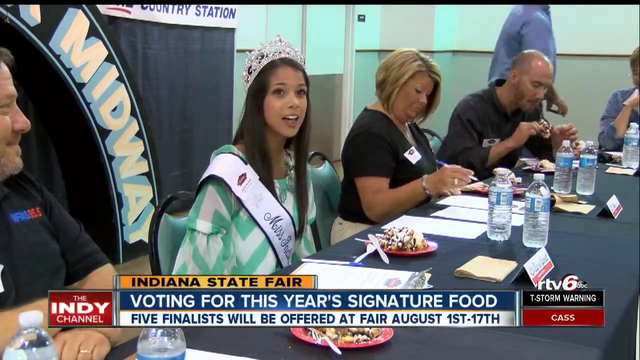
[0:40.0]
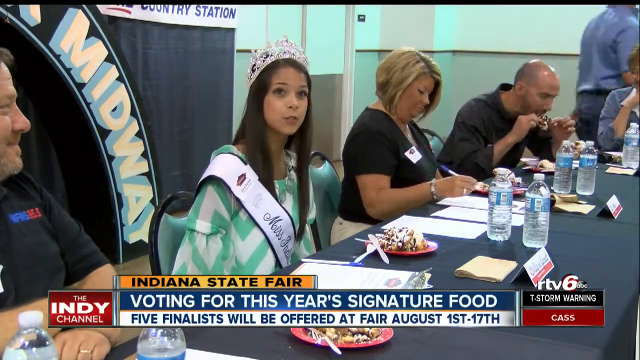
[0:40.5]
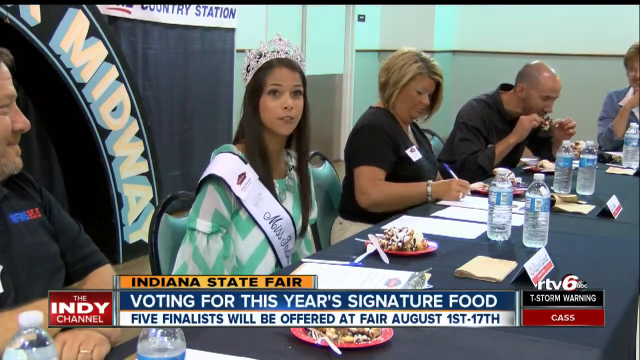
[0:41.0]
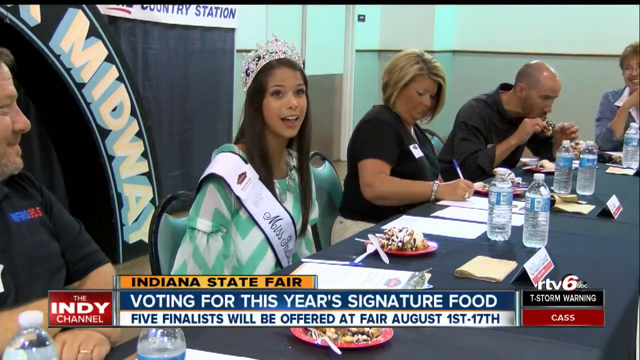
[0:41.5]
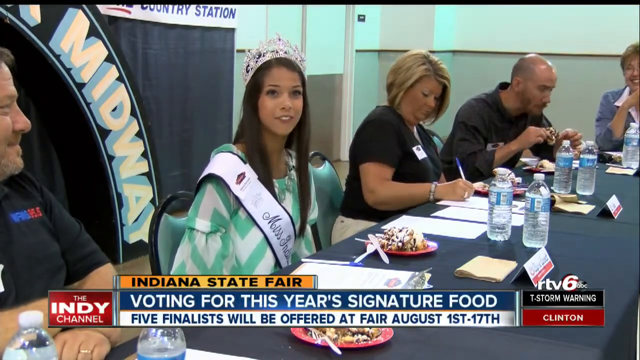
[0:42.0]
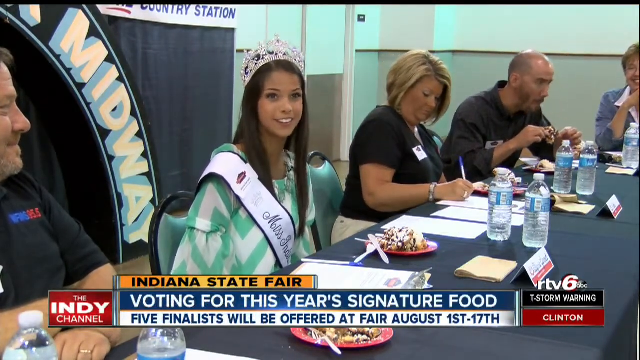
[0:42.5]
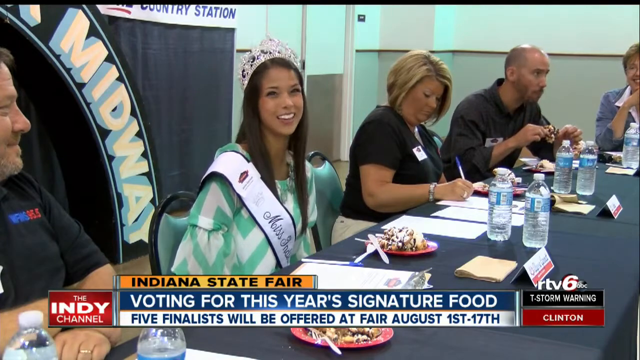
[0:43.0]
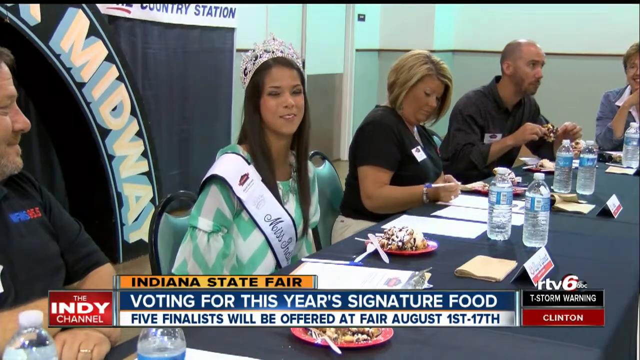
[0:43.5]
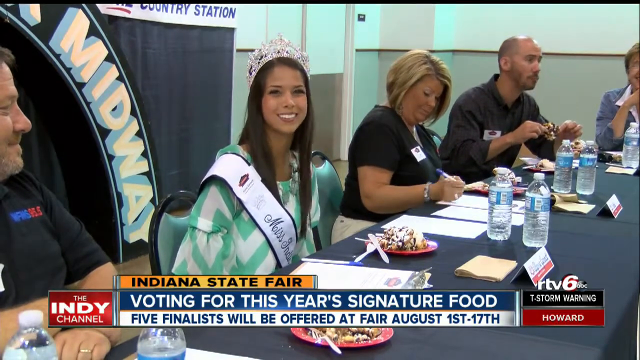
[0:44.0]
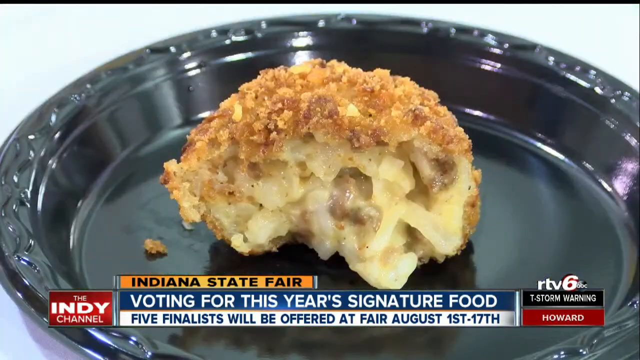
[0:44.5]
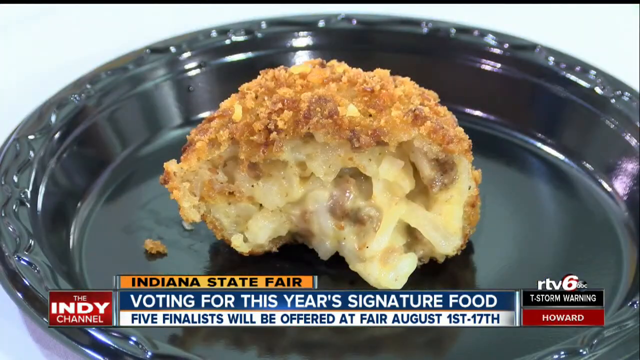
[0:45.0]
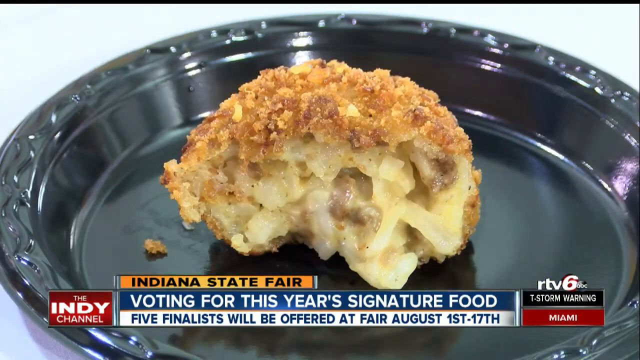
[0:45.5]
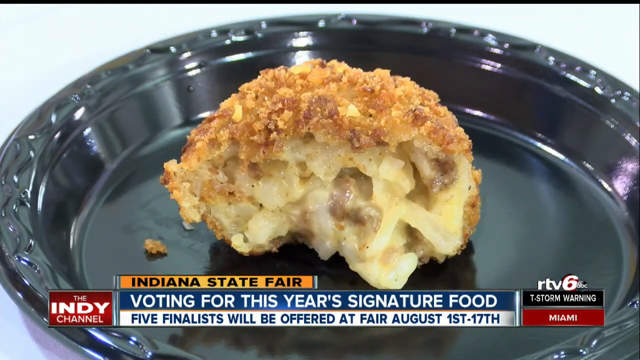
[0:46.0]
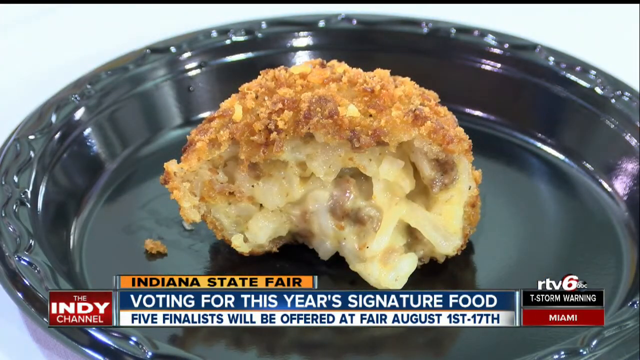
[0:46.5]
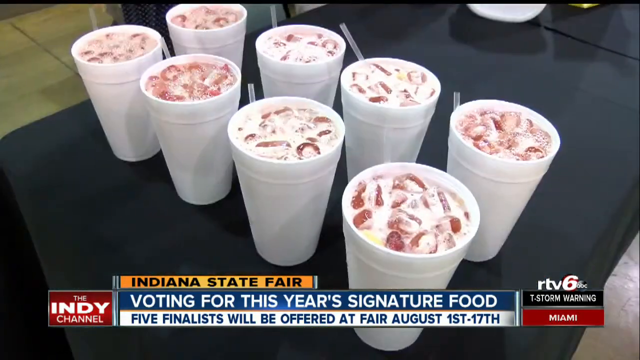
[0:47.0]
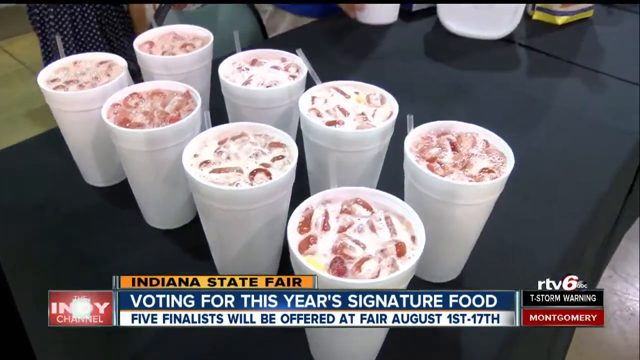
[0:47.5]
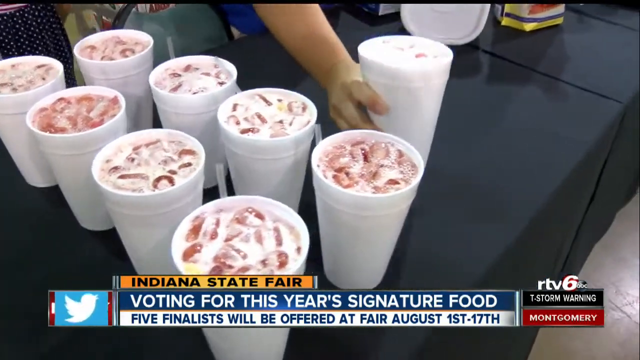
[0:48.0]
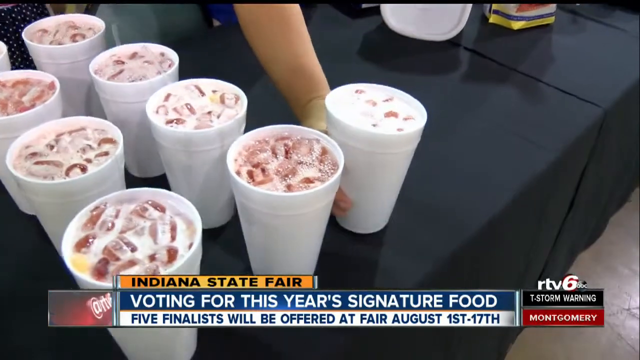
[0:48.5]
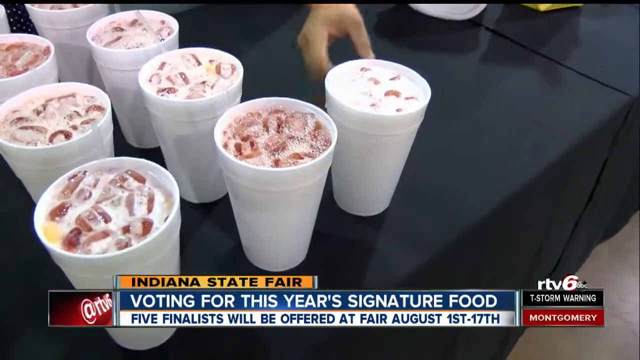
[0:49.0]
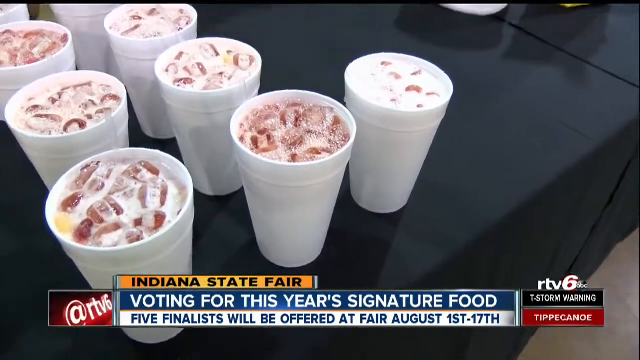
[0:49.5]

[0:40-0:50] At the judges' table, one judge is the Miss State Fair Queen, wearing her sash and crown and dressed up in a green and white striped dress. She gives her opinion, with a big piece of cake in front of her, and smiles at the camera. A close-up shows something that looks like a macaroni and cheese ball. Drinks with floating ice are served in white cups. Other judges sample the food. A man on the end holds a piece of food in his right hand, and a woman next to him, also a judge, writes something on pieces of paper in front of her. The judge on the end, a man, listens and watches as the Miss State Fair Queen answers questions. A man in a blue shirt walks around holding a phone in his hand, taking pictures of the food. Place cards sit in front of the judges, and each judge has a name tag on their shirt.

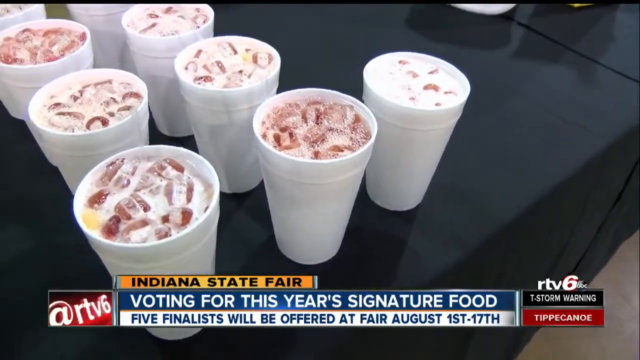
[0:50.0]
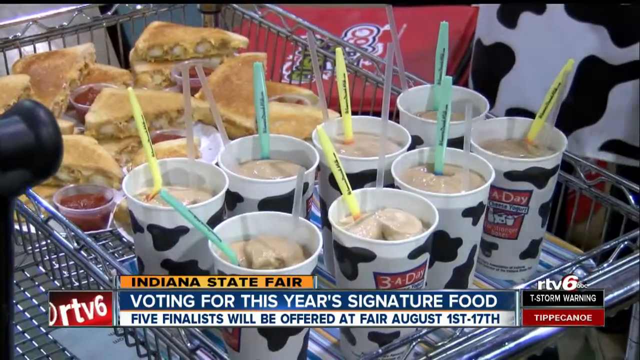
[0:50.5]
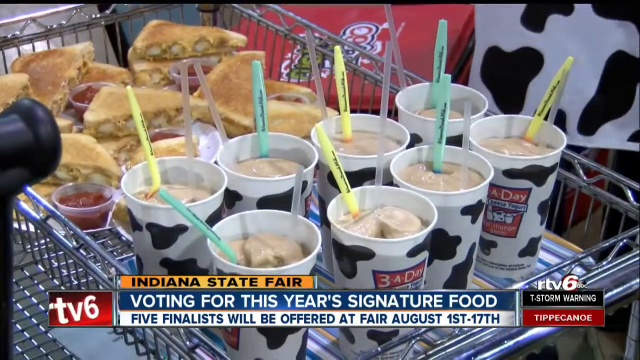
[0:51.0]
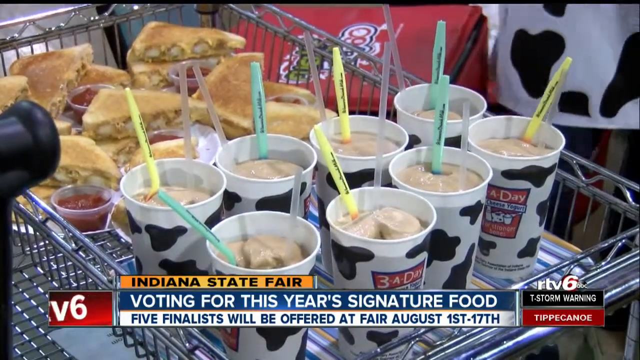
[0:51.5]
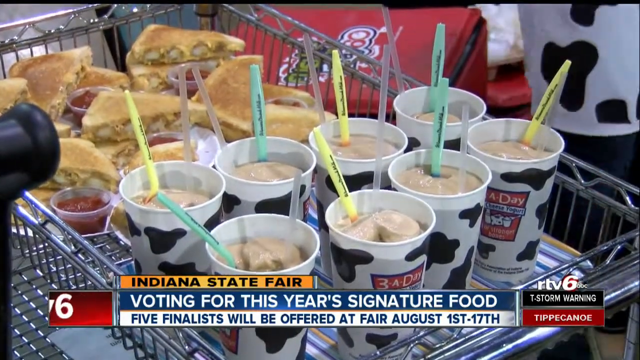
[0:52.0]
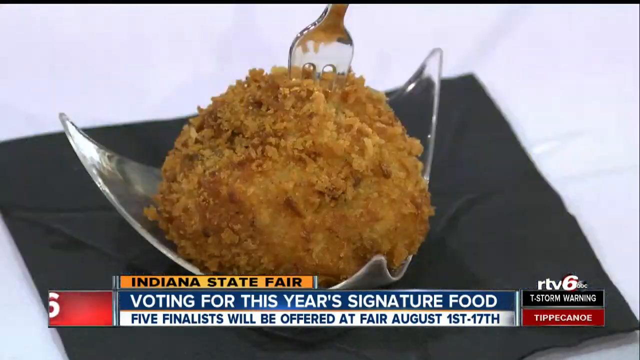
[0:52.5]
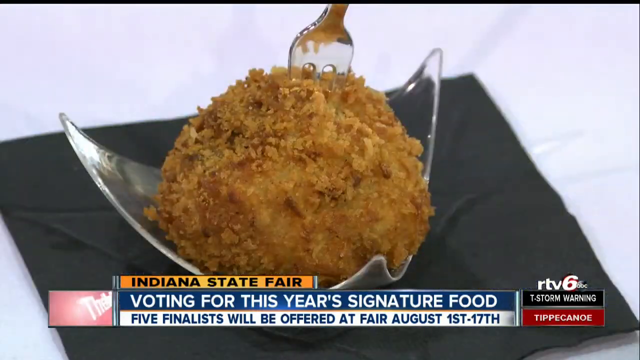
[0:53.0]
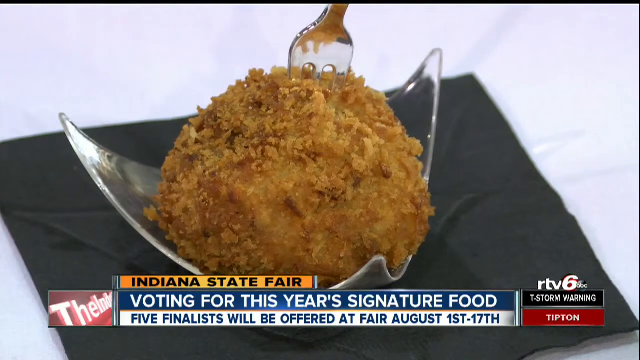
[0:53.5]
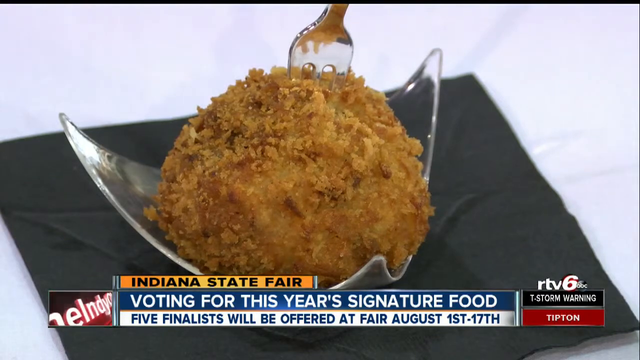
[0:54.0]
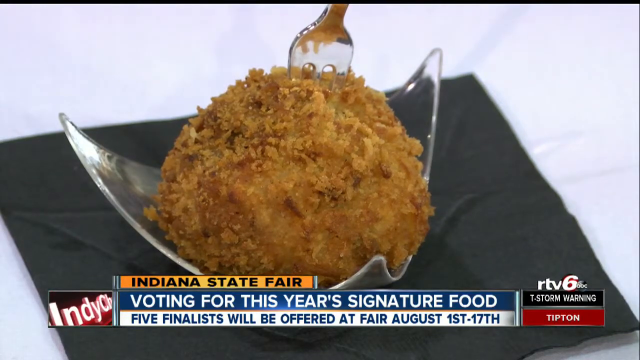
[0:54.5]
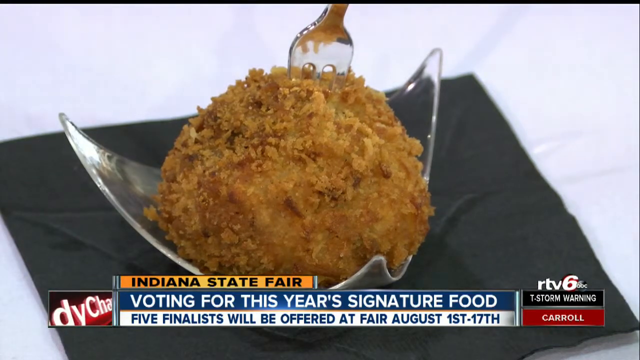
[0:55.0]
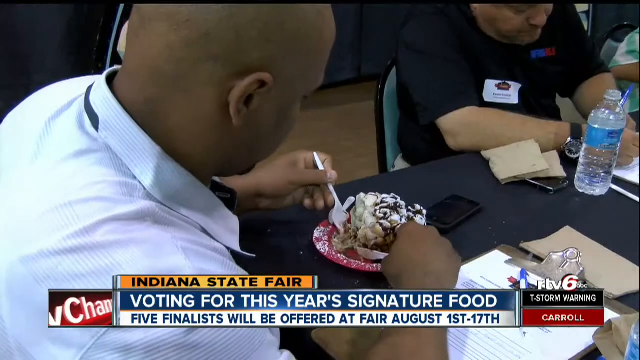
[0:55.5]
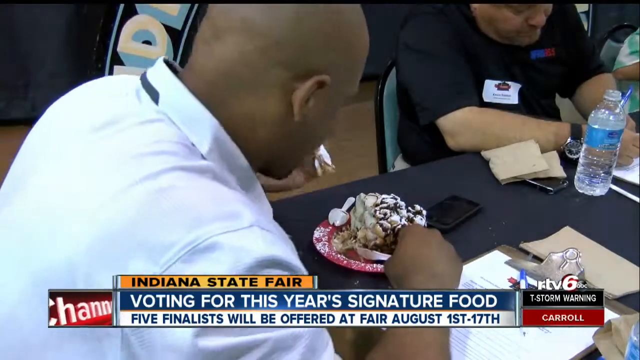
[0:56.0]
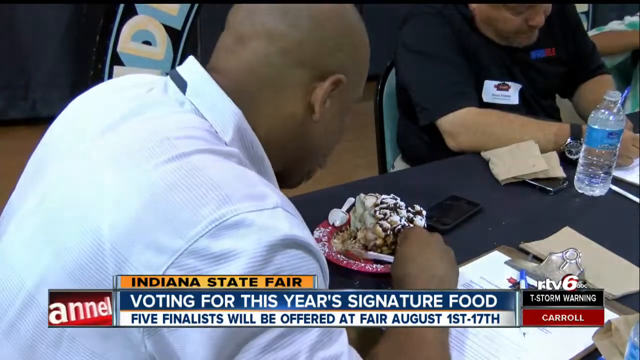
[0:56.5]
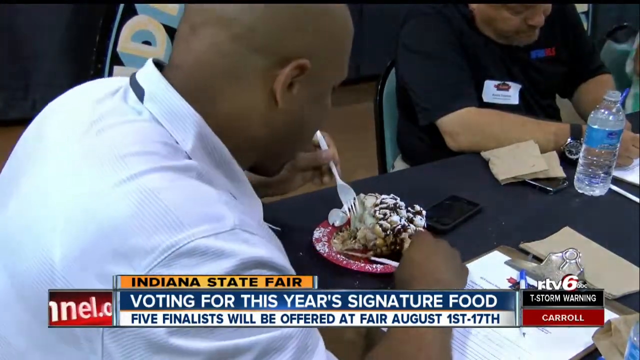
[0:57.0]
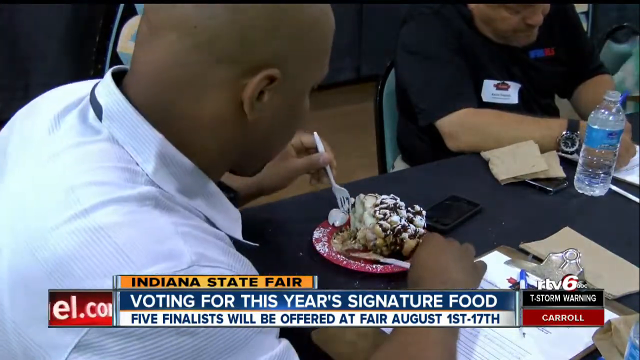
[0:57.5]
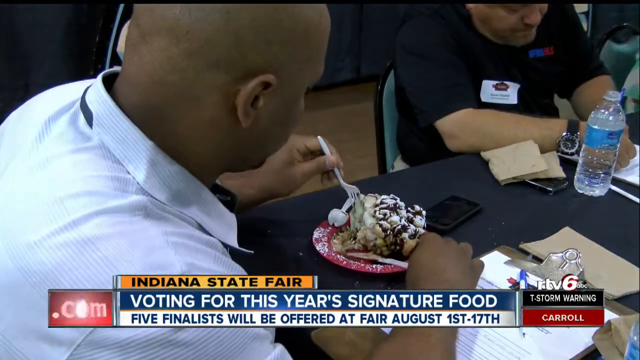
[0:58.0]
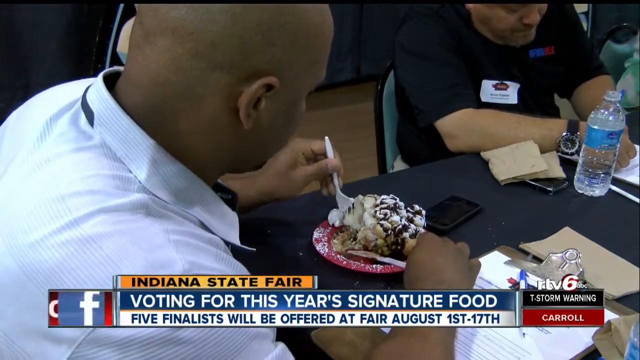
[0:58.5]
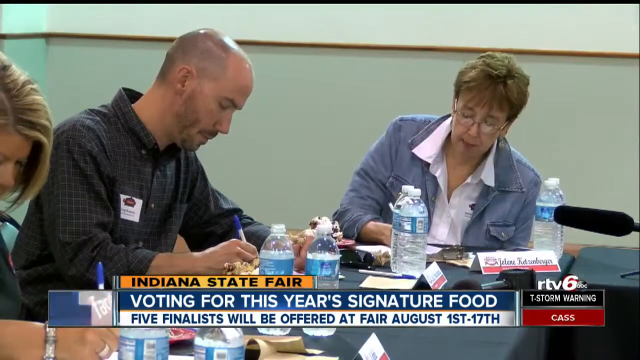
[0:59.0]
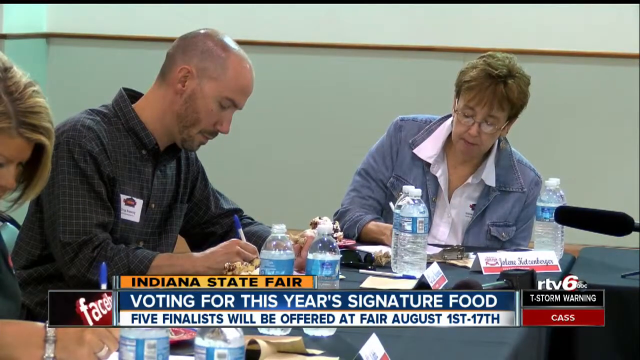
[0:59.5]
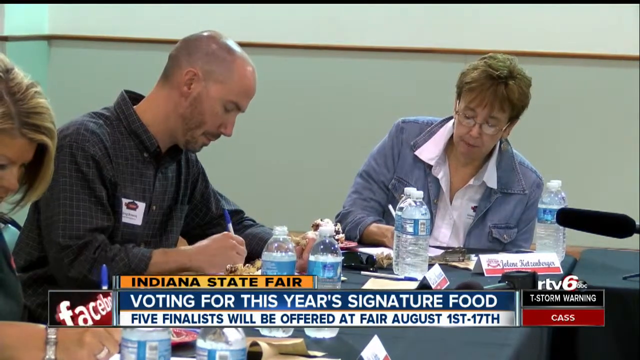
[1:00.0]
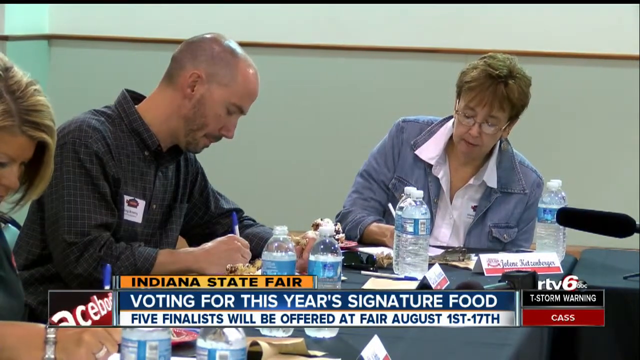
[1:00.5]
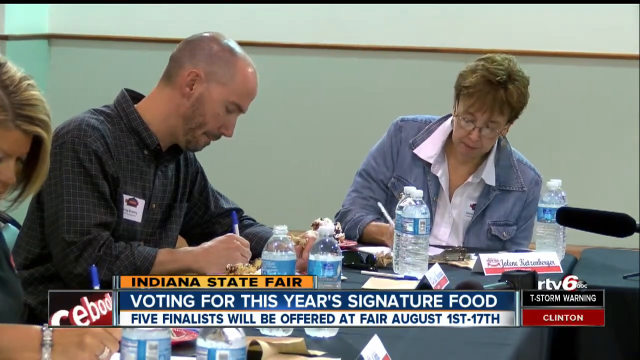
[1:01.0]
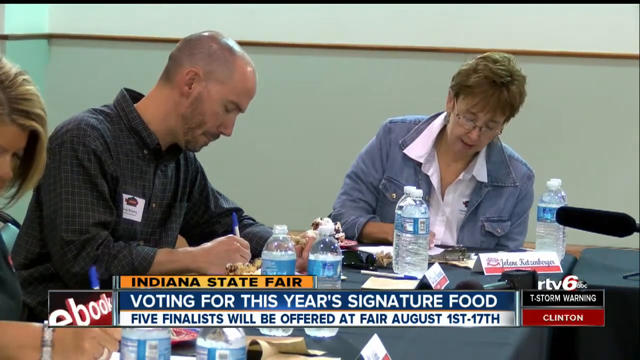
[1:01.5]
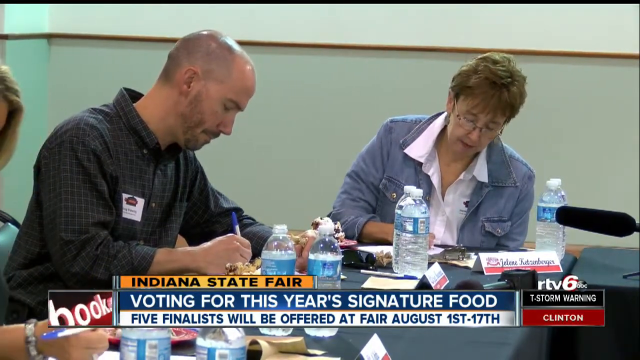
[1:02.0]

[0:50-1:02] The news segment shows the text "Indiana State Fair voting for this year's signature food. A five finalists will be offered at fair August 1st to 17th." A little cart holds drinks in white cups with black marks that almost look like a cow pattern. Sandwiches appear to have cut pickles in them. A cheese ball has a fork in it. A judge on the end tastes a big dessert. At the judges' table, they write down choices and notes on a piece of paper. They have name tags on their shirts and little paper markers in front of them on the table.